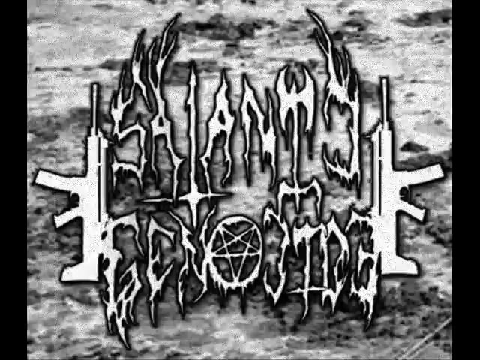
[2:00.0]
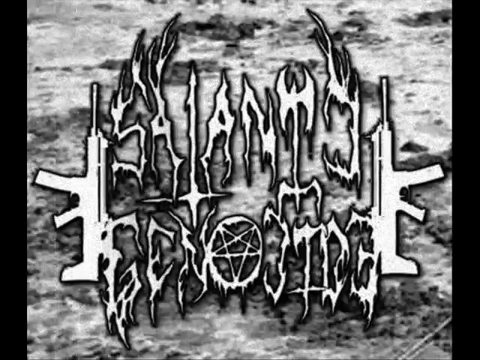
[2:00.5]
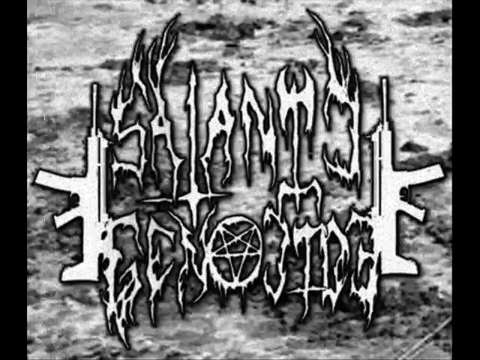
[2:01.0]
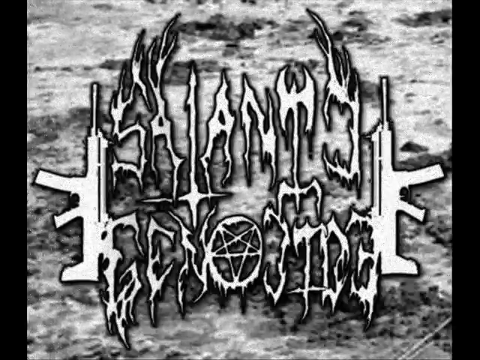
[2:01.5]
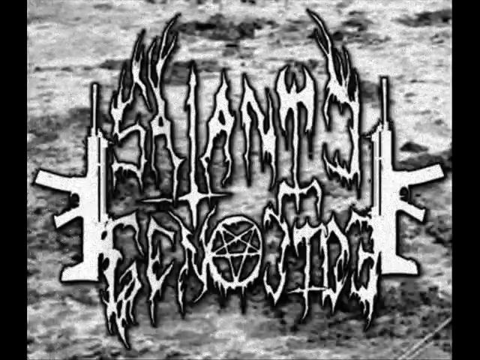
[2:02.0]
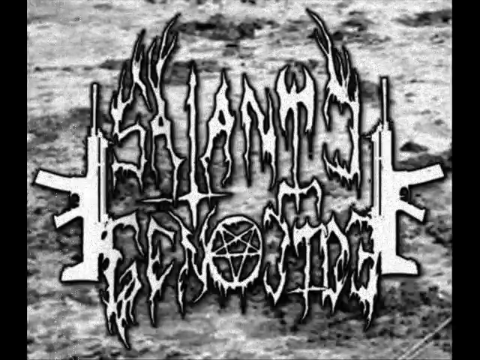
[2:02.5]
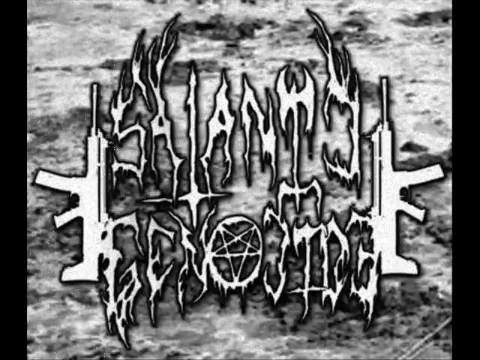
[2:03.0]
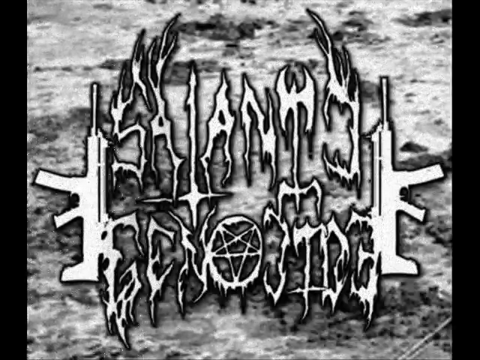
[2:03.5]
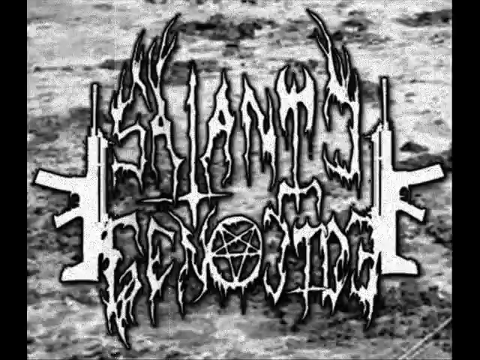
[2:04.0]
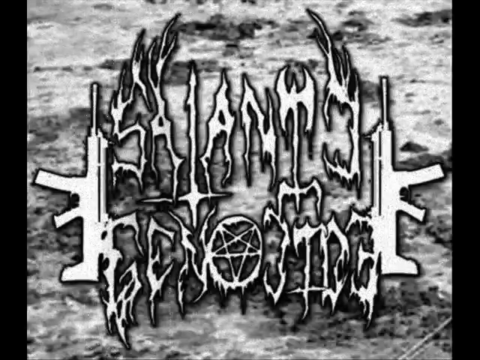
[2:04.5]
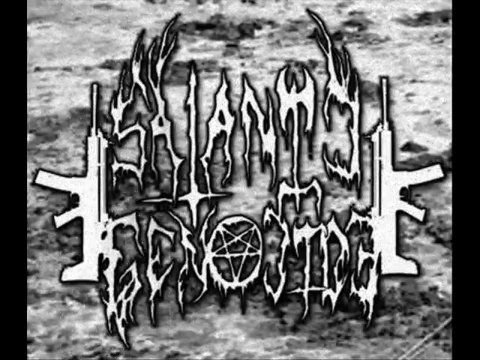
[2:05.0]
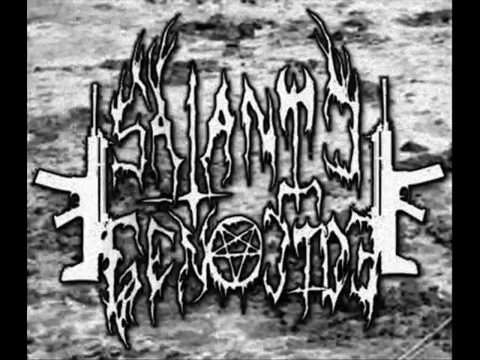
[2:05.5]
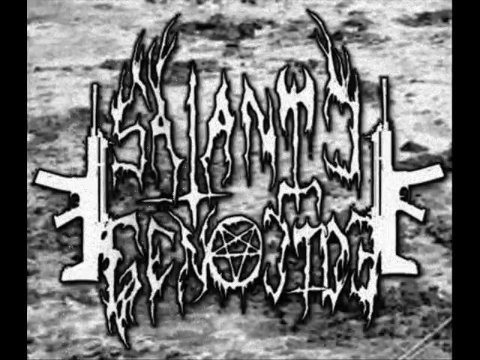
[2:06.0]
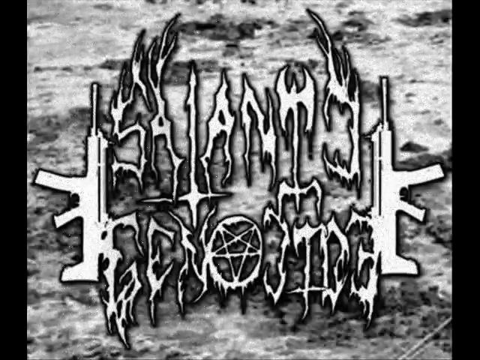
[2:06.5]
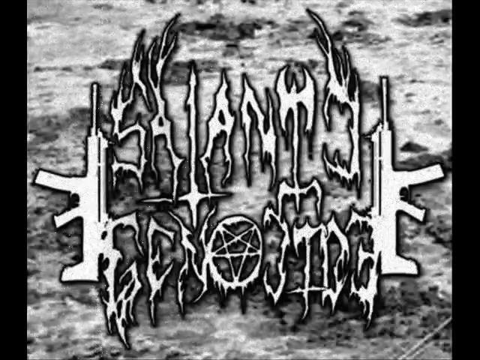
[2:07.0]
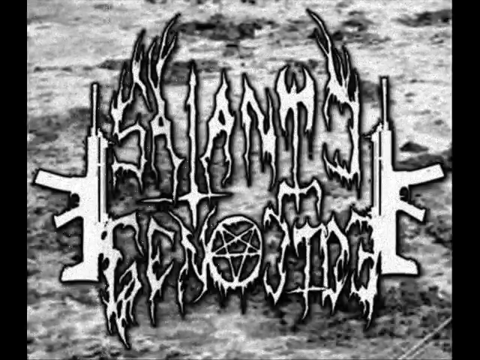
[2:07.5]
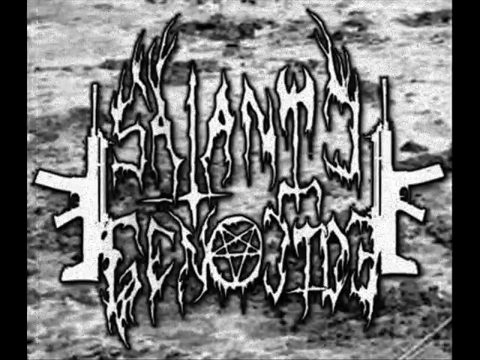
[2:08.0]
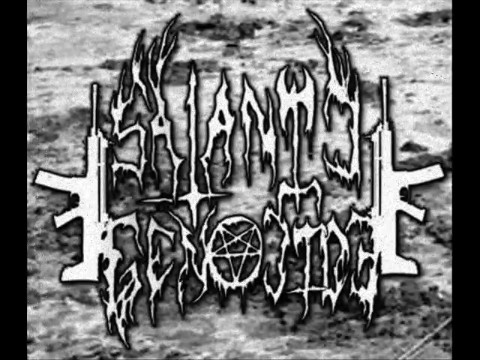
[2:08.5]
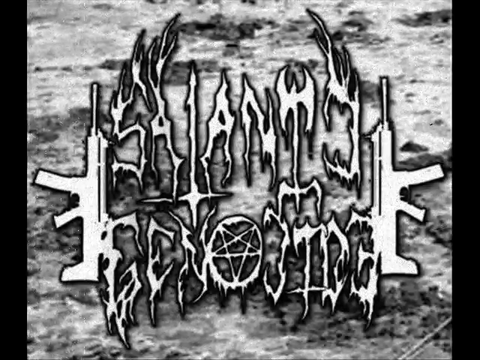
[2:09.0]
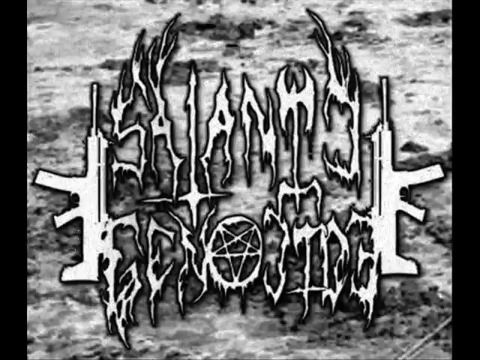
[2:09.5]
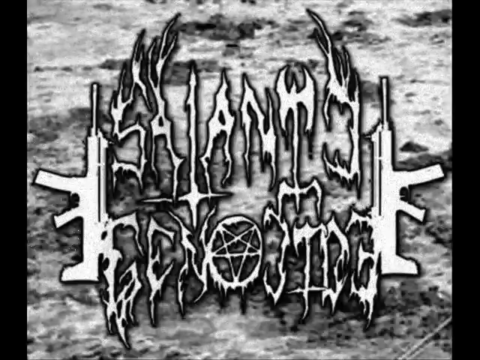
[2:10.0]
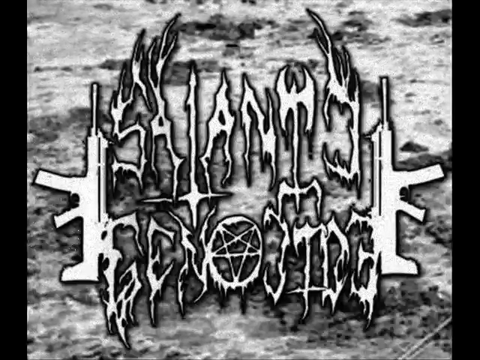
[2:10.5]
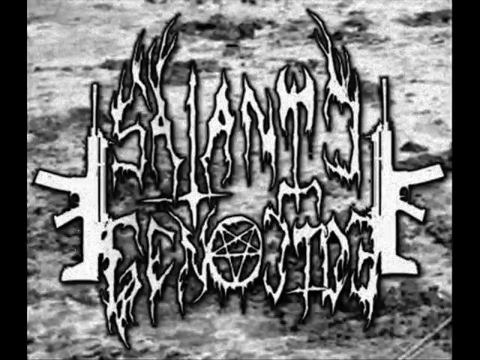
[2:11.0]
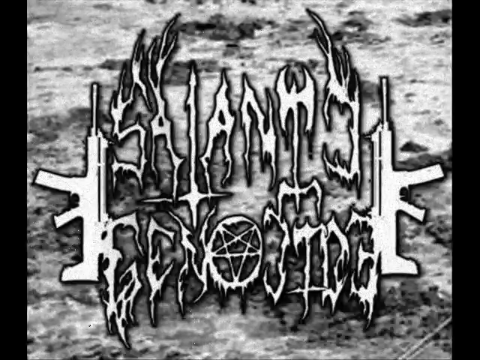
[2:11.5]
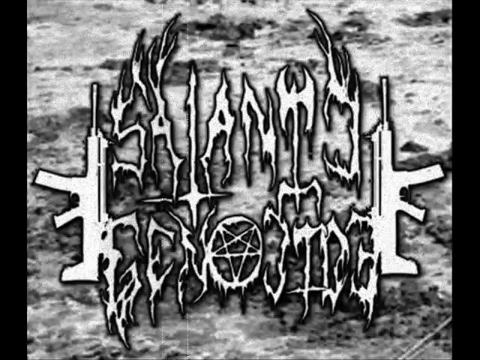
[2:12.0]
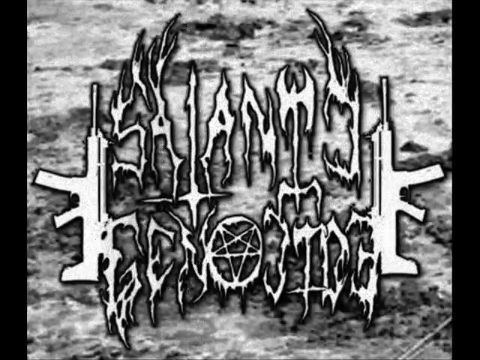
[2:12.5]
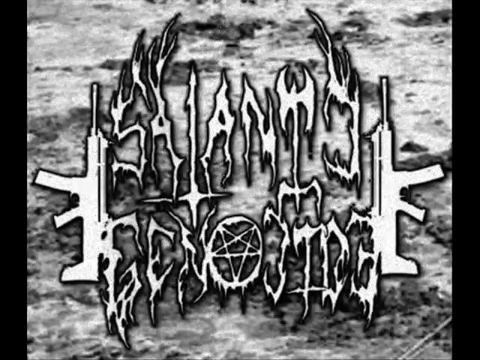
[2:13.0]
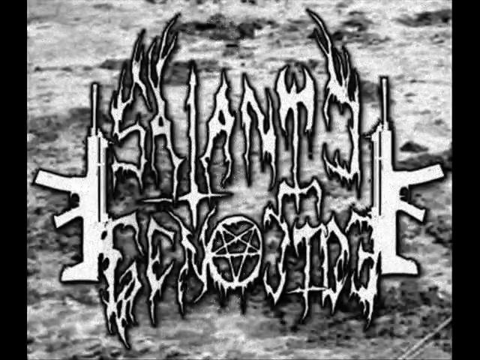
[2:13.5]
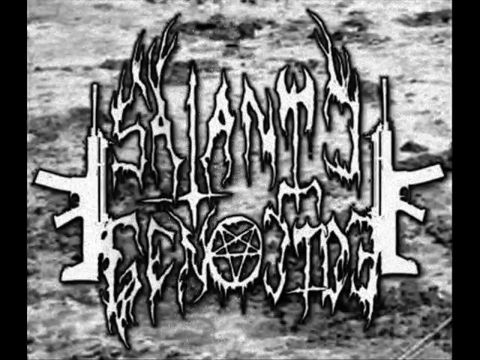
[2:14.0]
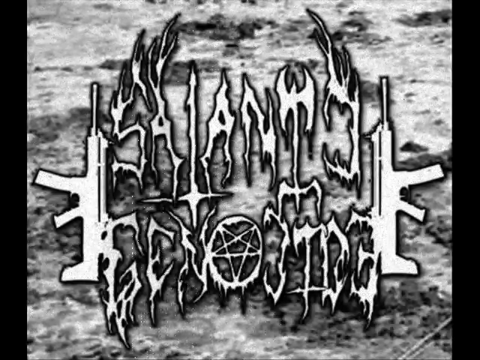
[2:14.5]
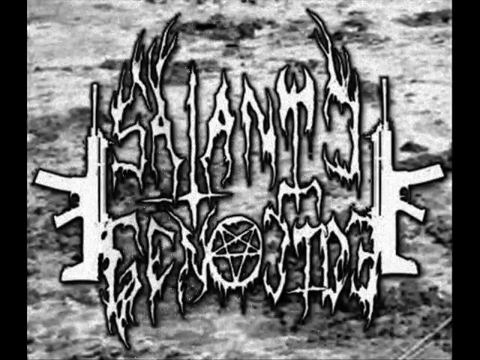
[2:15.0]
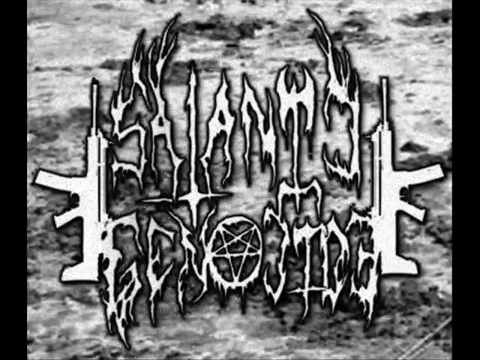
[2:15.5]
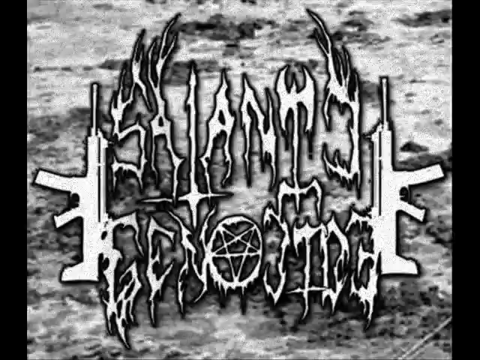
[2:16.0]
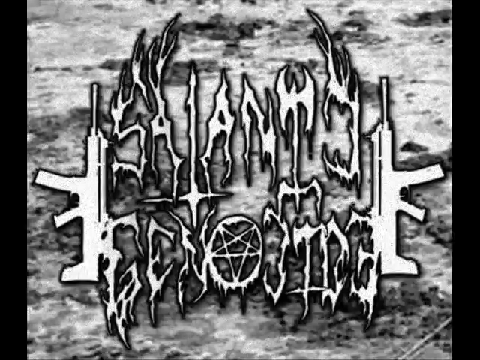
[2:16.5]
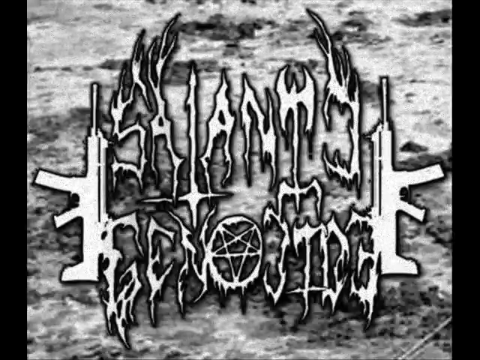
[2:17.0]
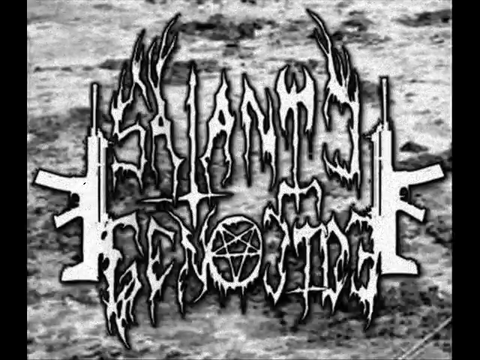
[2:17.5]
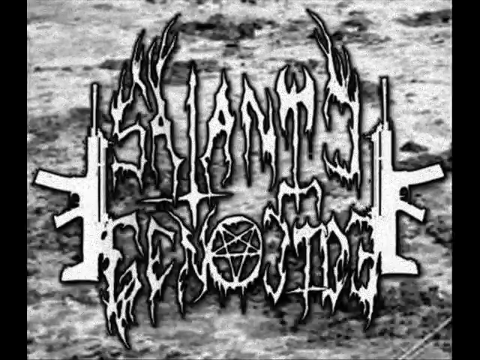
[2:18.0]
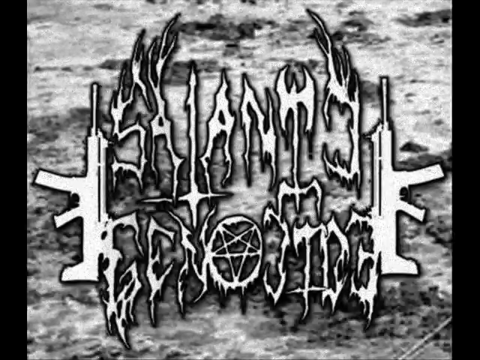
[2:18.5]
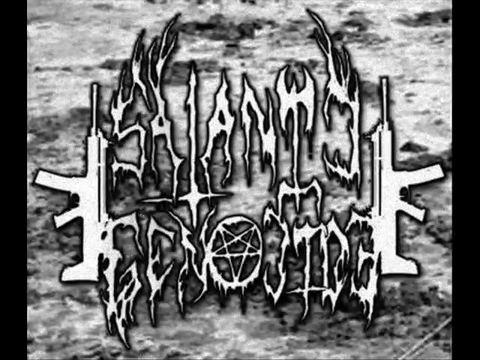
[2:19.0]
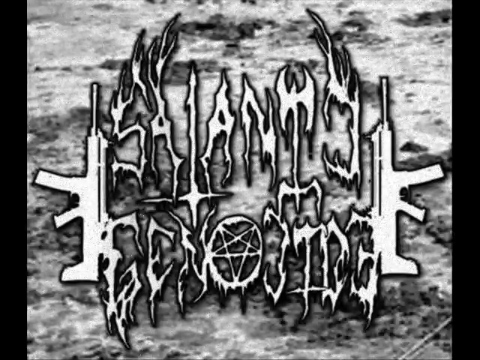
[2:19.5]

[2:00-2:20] The image starts to look like old black-and-white film in a projector. The font of "Satanic Genocide" is getting much darker, and the image seems to be in a projector-like state, with a little white line and little burn circles showing.